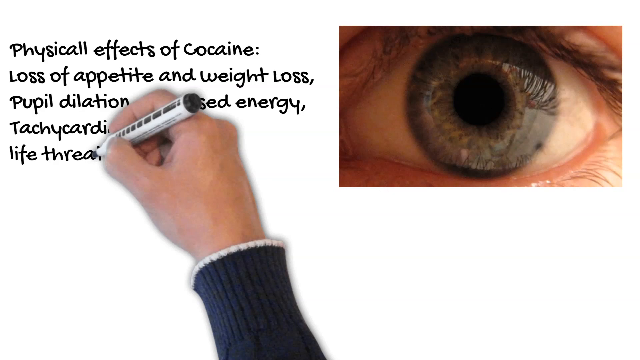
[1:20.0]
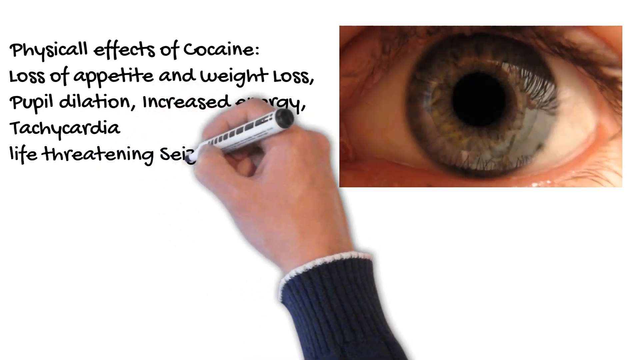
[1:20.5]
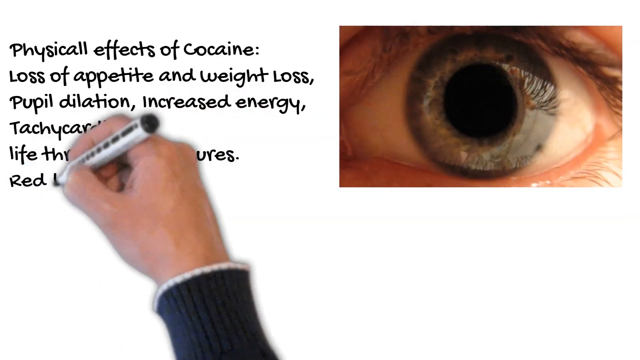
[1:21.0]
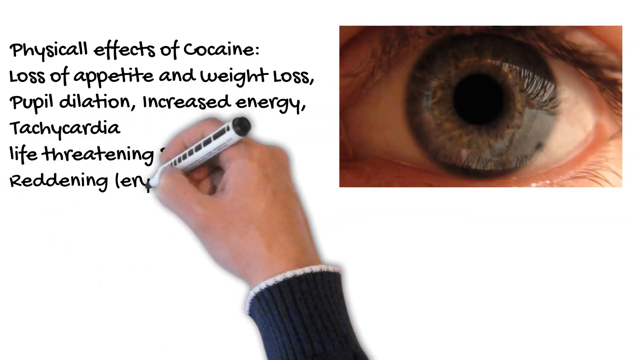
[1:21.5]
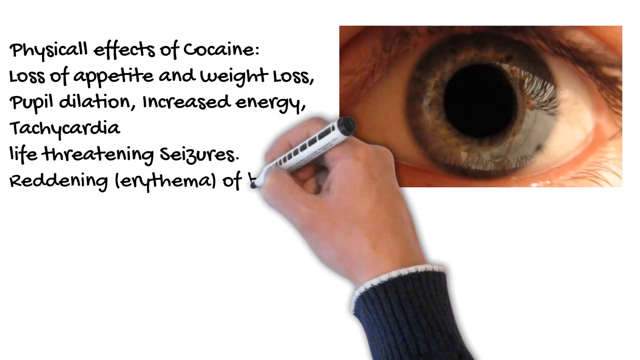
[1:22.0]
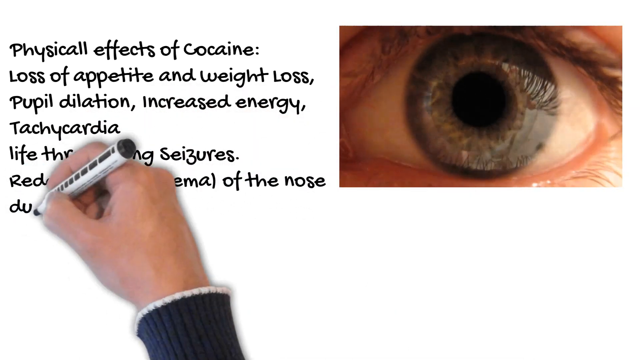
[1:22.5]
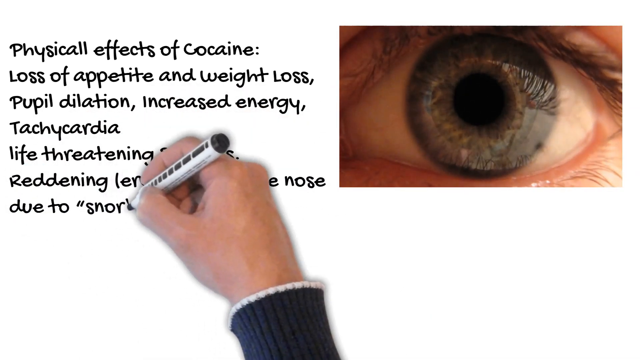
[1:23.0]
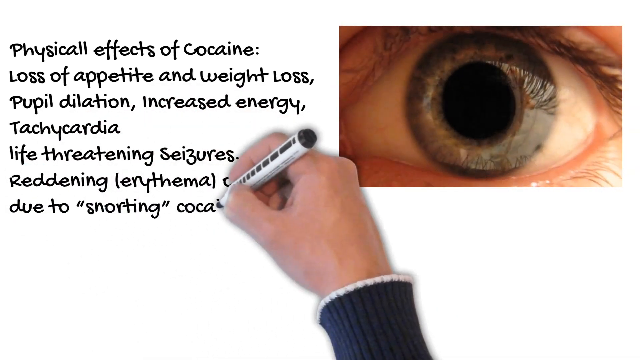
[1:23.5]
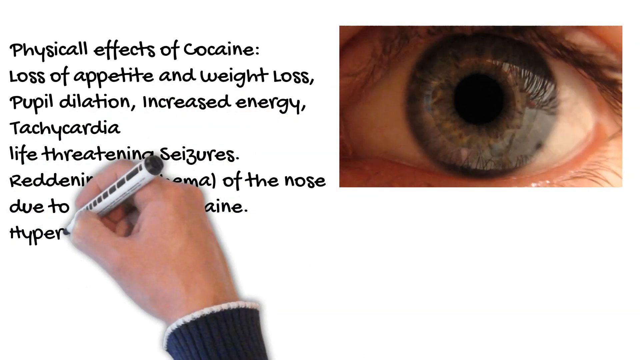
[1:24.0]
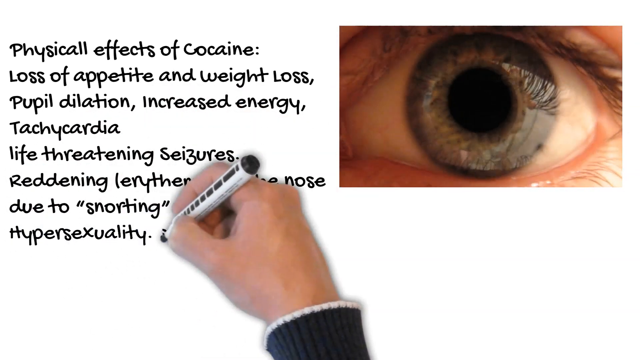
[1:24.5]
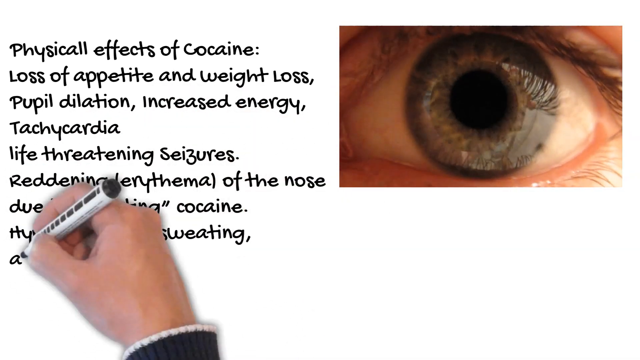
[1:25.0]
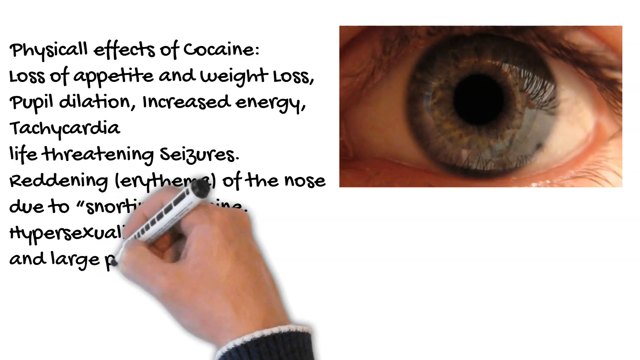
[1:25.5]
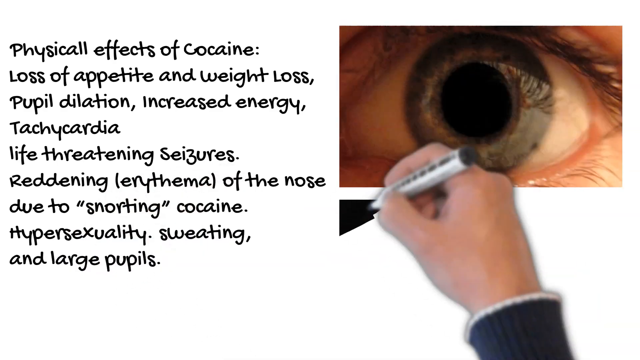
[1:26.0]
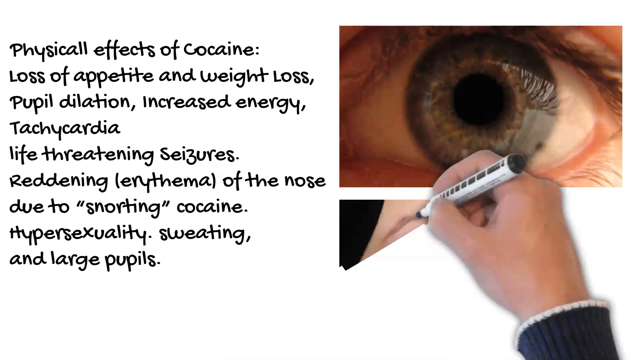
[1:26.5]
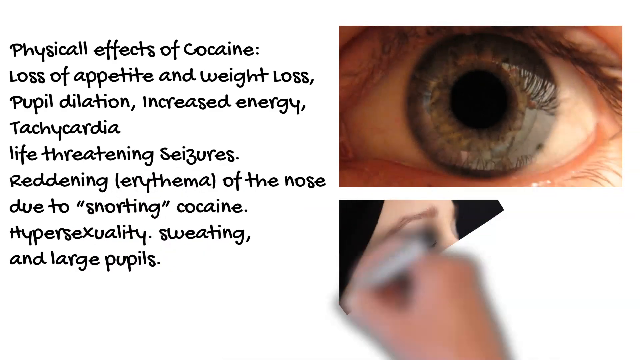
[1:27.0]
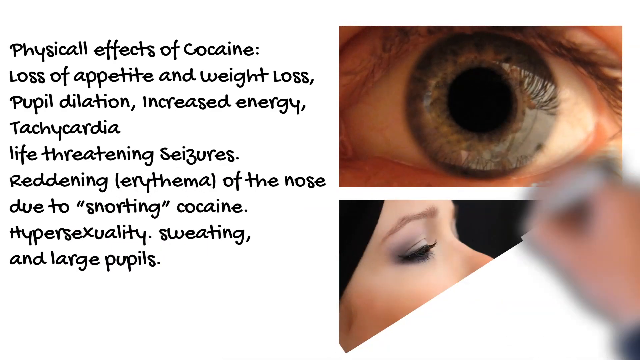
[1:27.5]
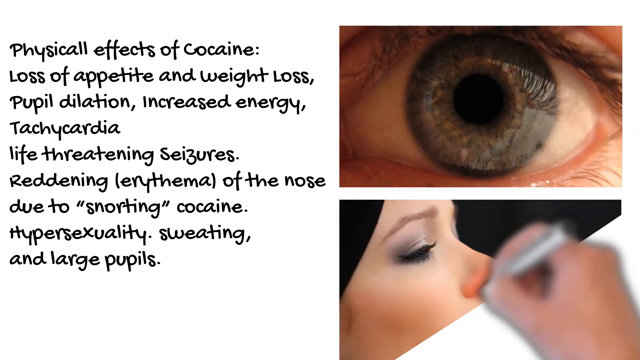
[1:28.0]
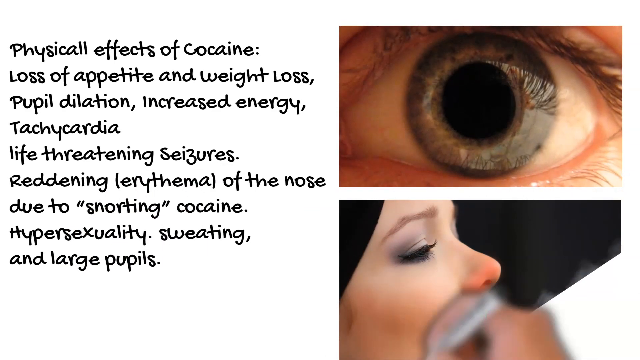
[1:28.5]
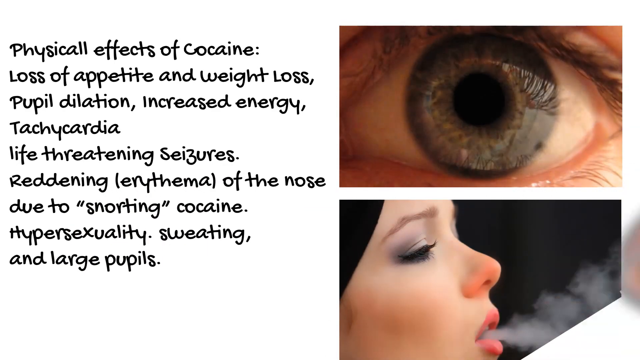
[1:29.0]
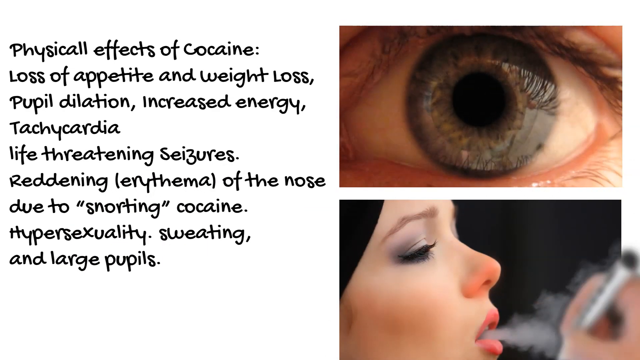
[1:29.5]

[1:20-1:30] A realistic photo of an eye is on the right-hand side, its pupils repeatedly dilating in and out. On the left, an animated hand draws words on the whiteboard: "physical effects of cocaine, loss of appetite and weight loss, pupil dilation, increased energy, tachycardia, life-threatening seizures," an item about reddening of the nose due to snorting cocaine, "hypersexuality, sweating, and large pupils." The hand then draws a picture in the lower right-hand corner of a female with a red nose blowing smoke out of her mouth.